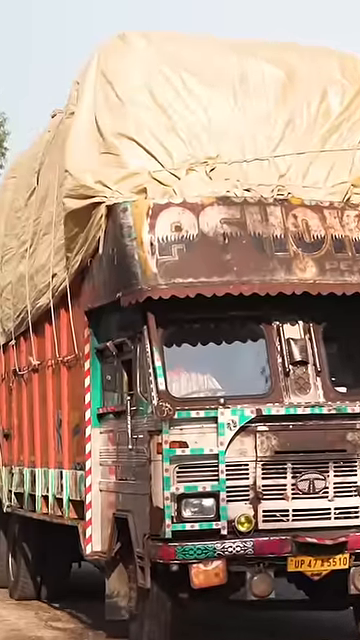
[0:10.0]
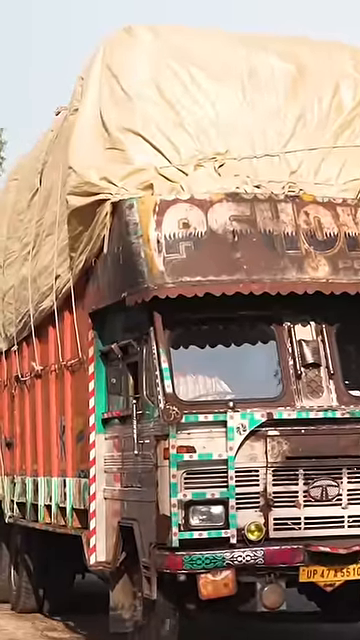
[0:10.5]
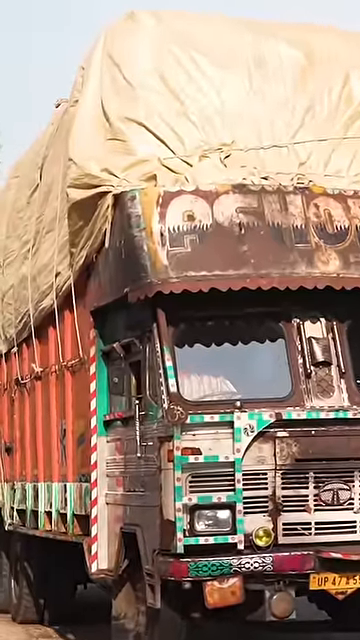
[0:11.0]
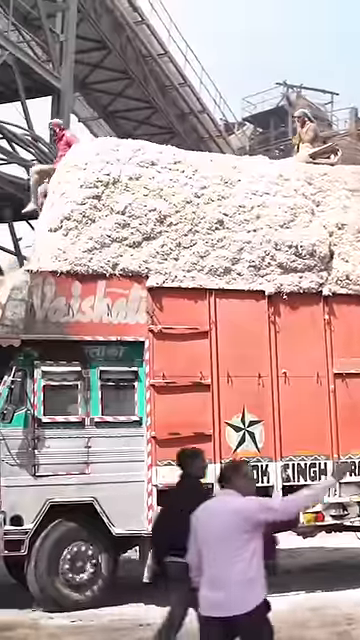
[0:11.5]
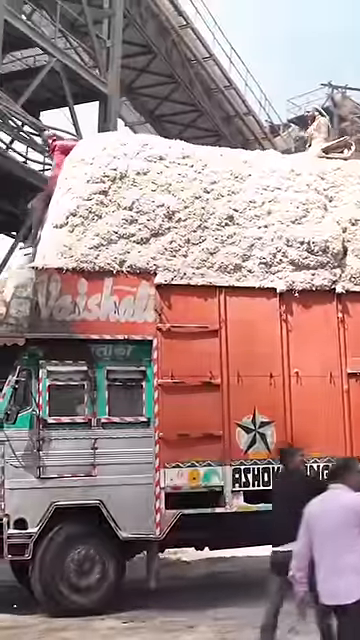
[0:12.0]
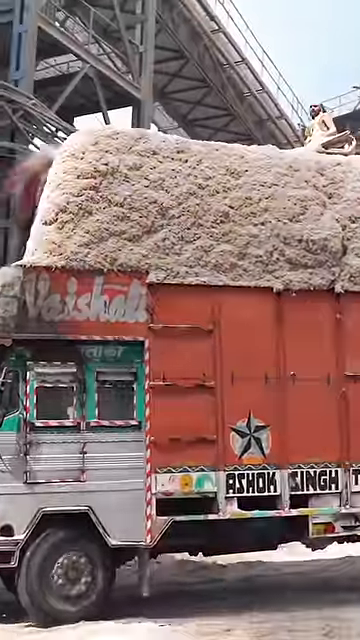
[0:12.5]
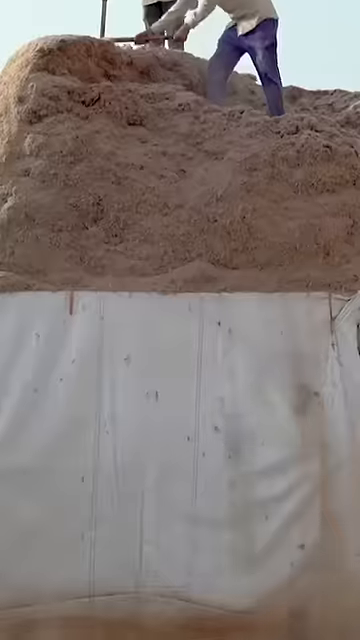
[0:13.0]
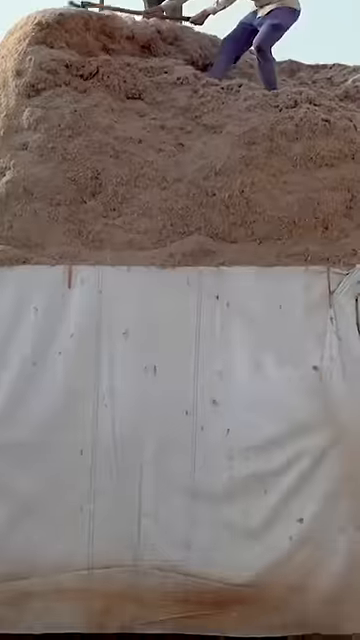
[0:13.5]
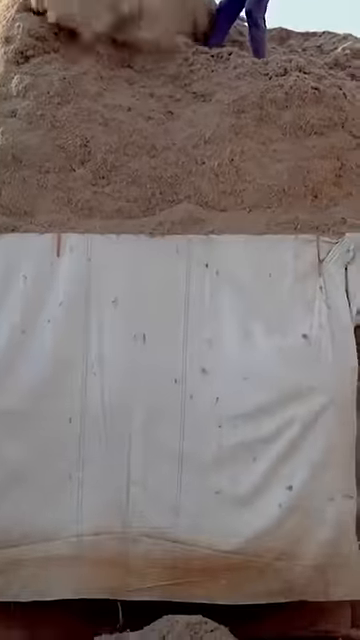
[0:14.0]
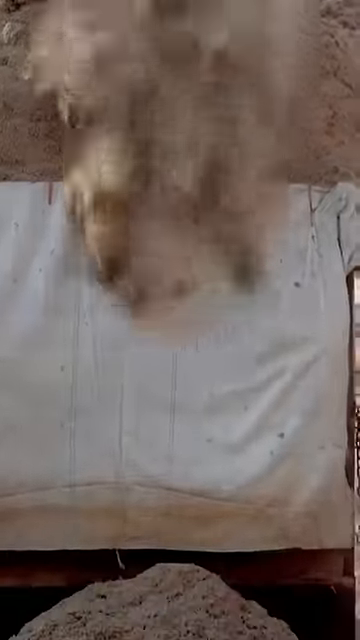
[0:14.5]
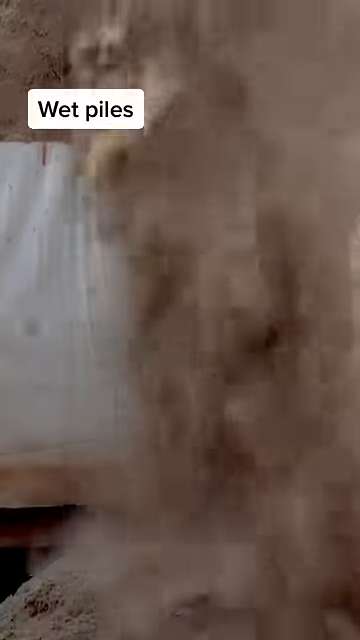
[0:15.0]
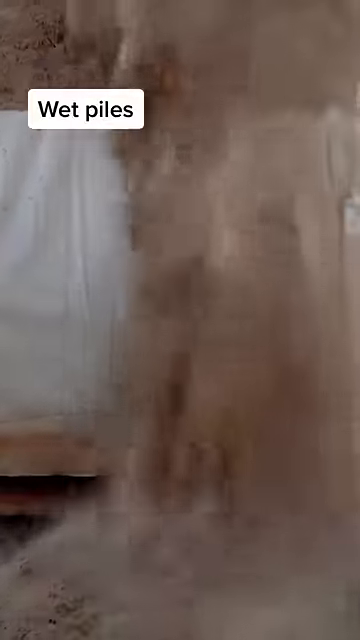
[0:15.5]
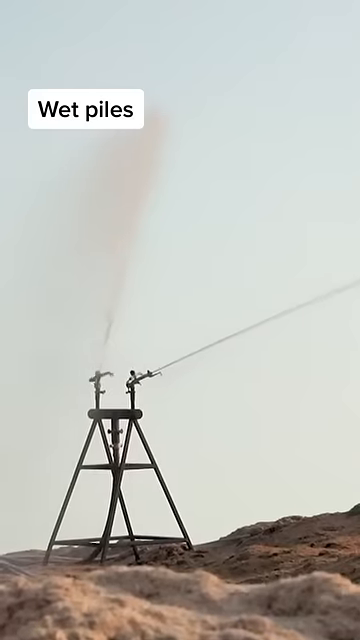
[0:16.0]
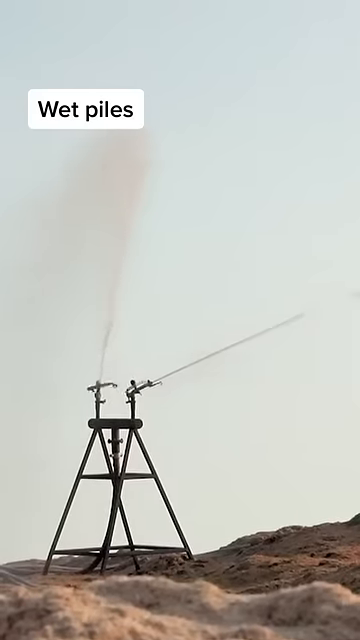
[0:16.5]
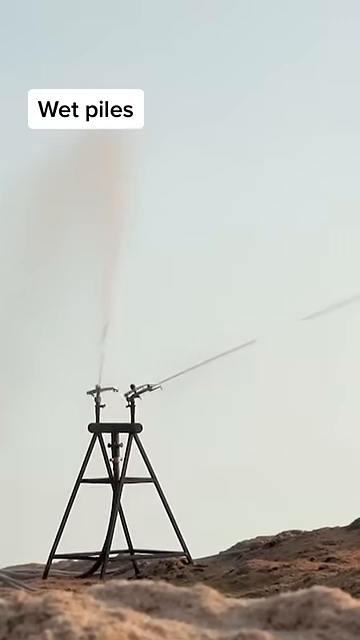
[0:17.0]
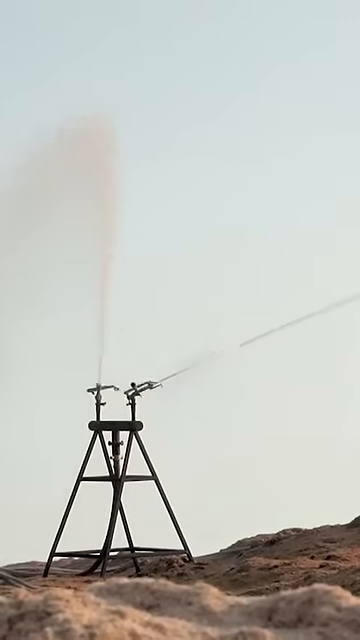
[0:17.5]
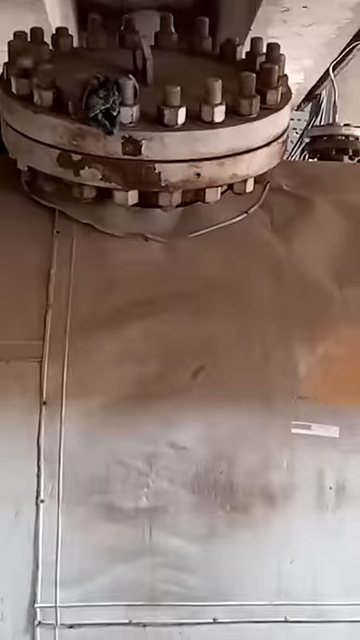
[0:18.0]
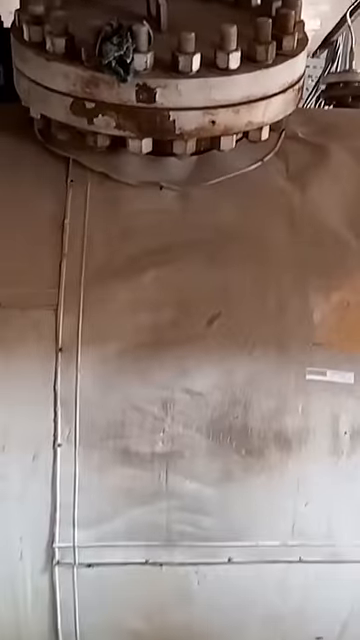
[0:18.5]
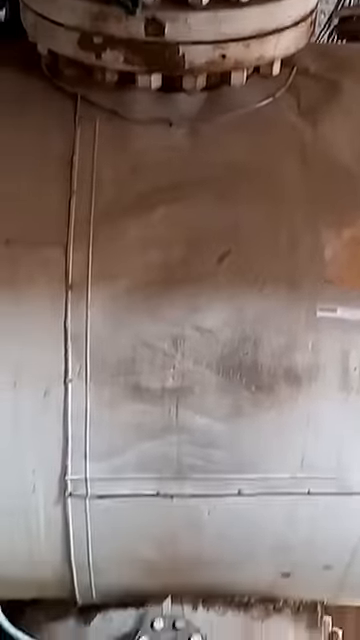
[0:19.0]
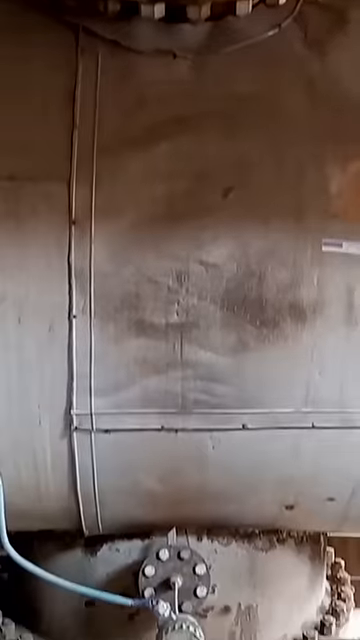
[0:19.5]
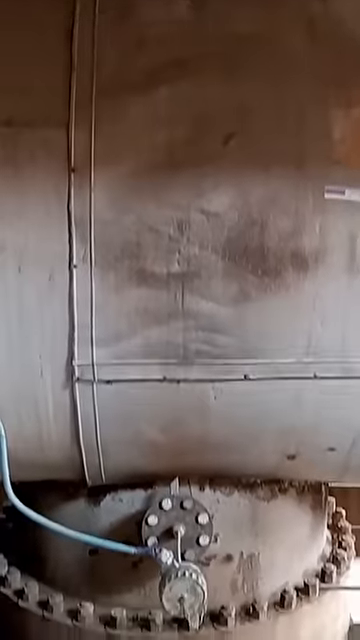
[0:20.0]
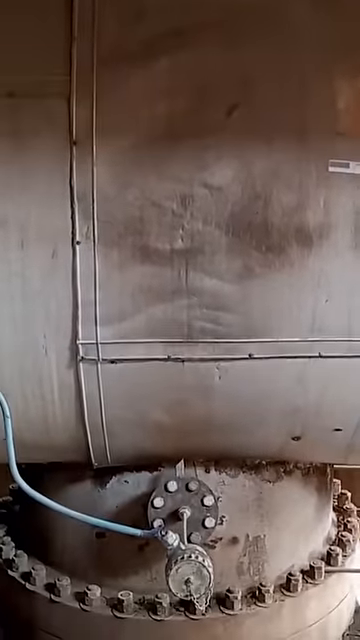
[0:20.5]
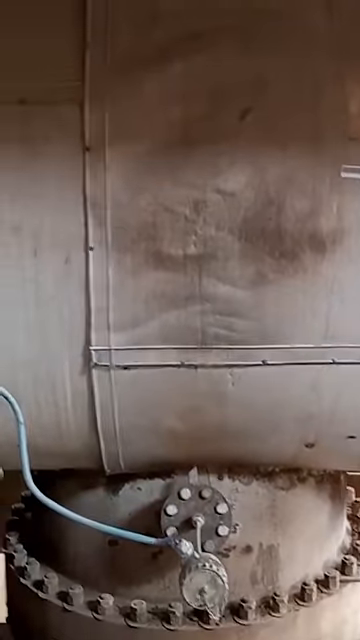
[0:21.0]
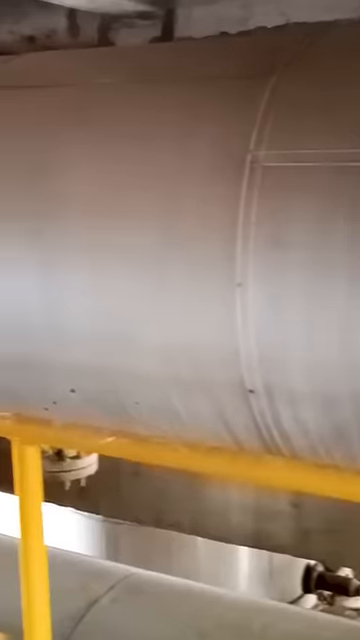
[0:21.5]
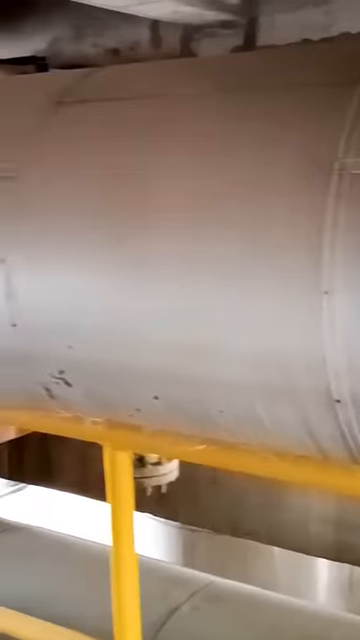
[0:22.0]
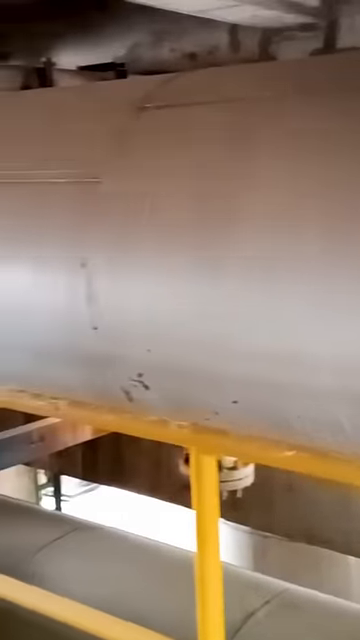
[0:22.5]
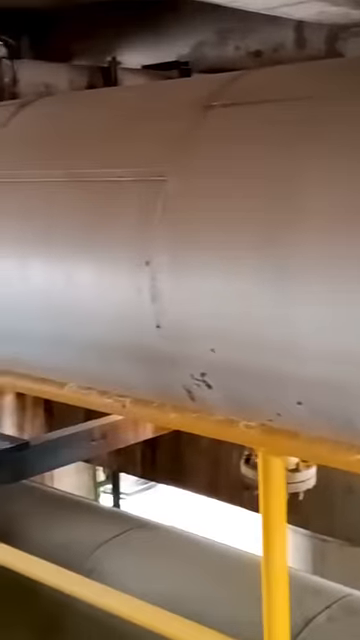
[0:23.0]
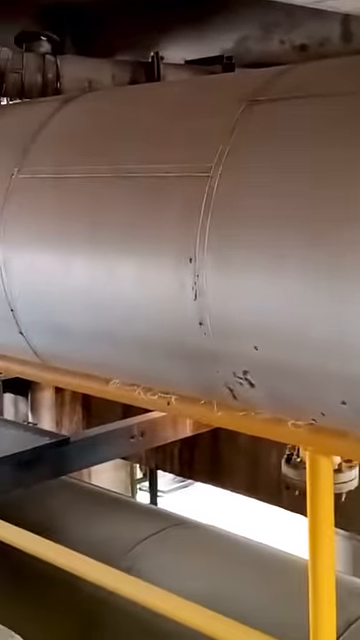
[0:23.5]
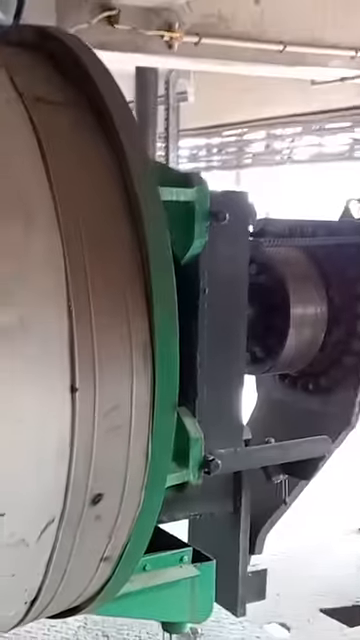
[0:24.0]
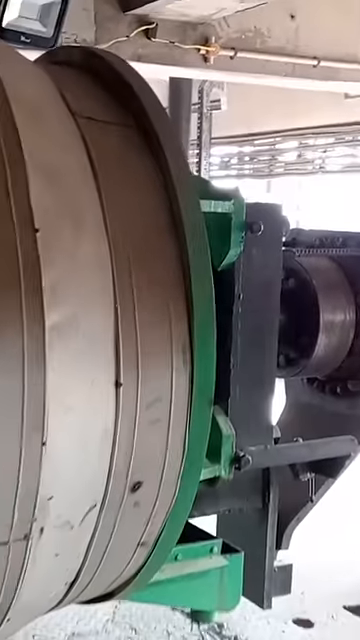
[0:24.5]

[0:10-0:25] Sugarcane waste is trucked in on red trucks with people on top of it. The people on top brush some of the sugarcane waste onto the ground, and panning shots show the ground full of sugarcane waste. The words "wet pile" briefly flash on the screen before a large machine of some sort appears, apparently where the sugarcane waste is being processed.